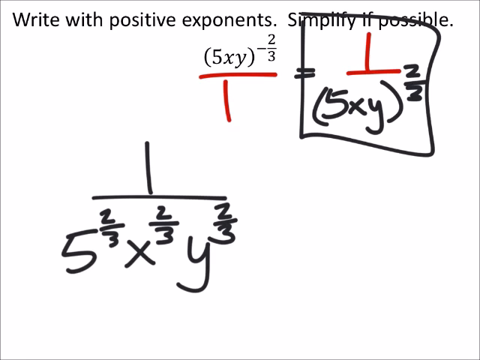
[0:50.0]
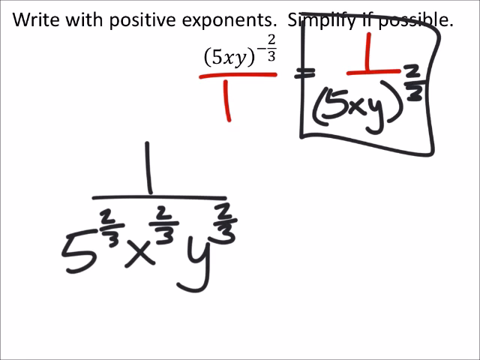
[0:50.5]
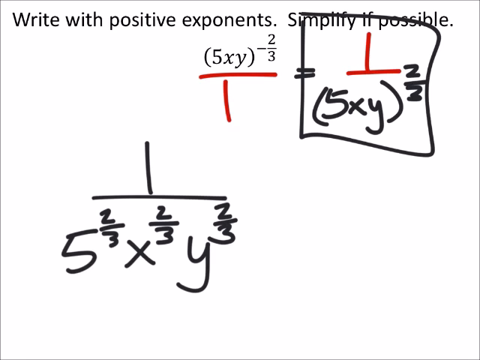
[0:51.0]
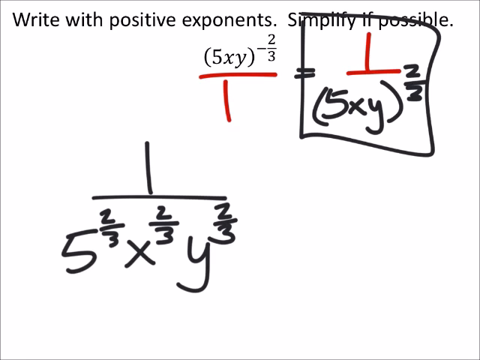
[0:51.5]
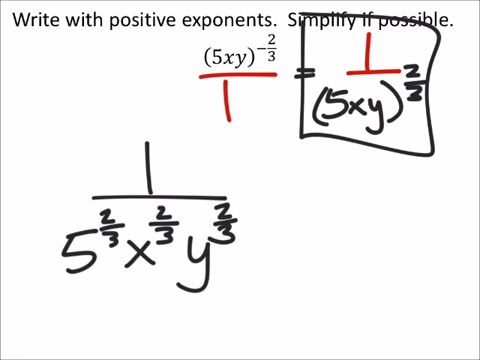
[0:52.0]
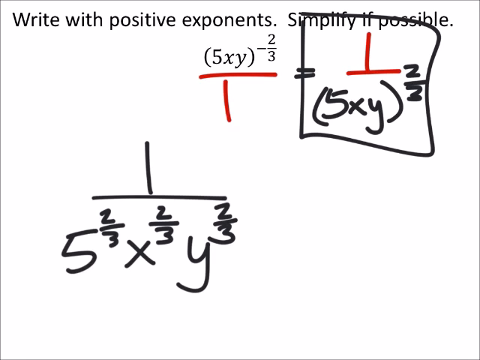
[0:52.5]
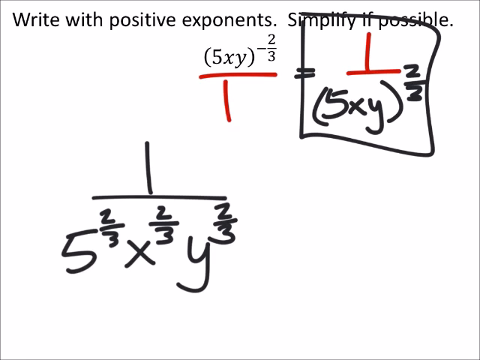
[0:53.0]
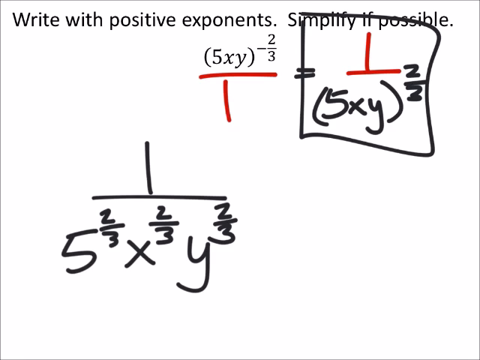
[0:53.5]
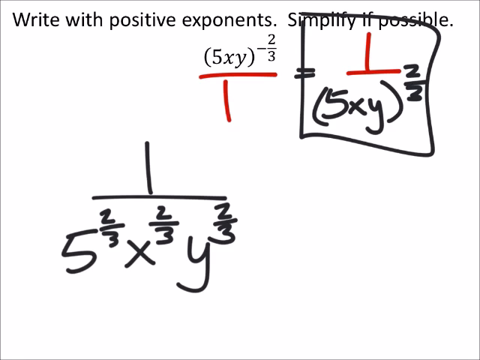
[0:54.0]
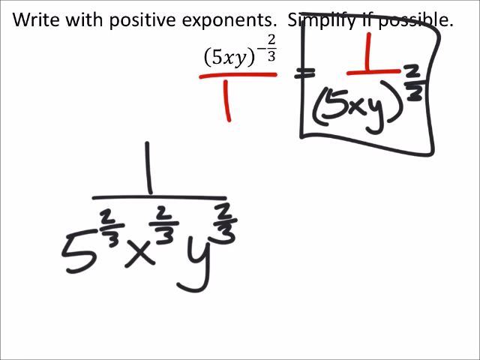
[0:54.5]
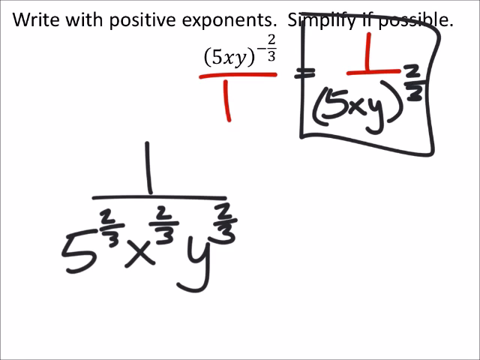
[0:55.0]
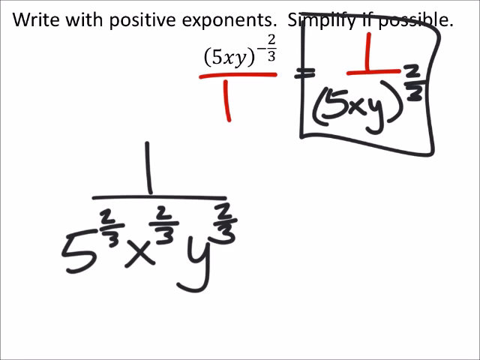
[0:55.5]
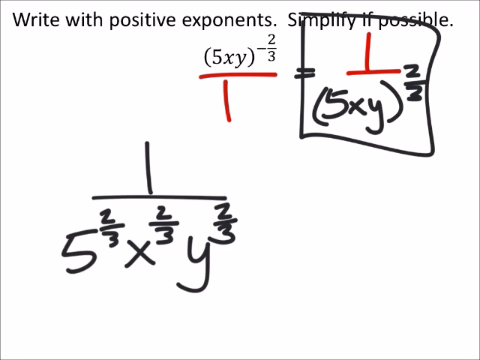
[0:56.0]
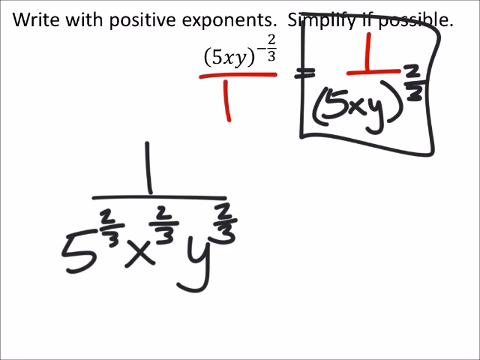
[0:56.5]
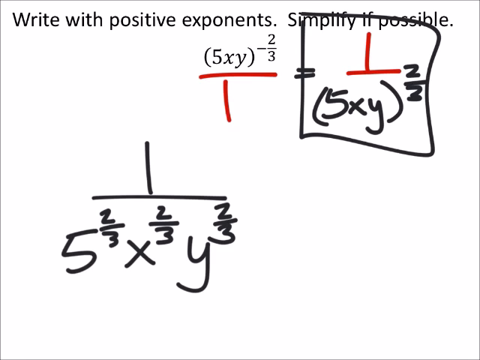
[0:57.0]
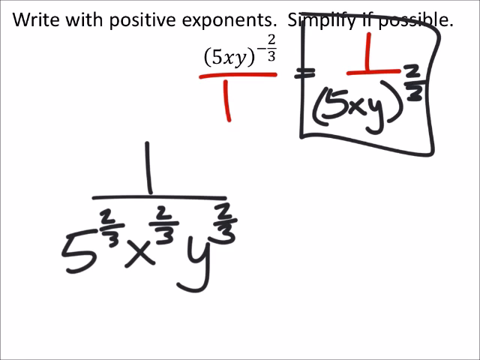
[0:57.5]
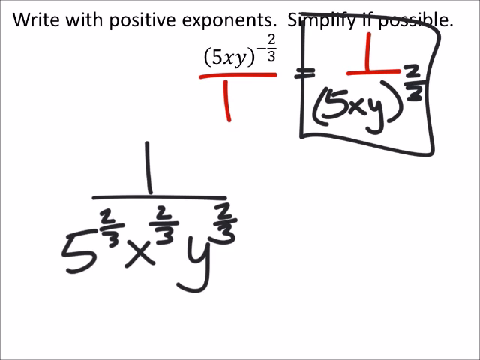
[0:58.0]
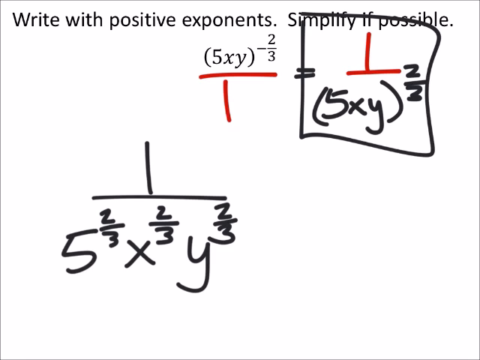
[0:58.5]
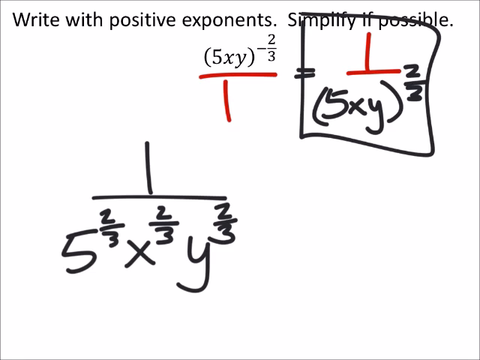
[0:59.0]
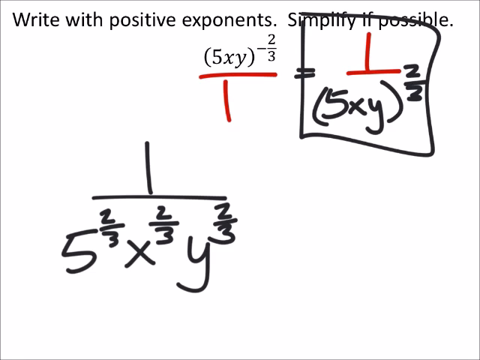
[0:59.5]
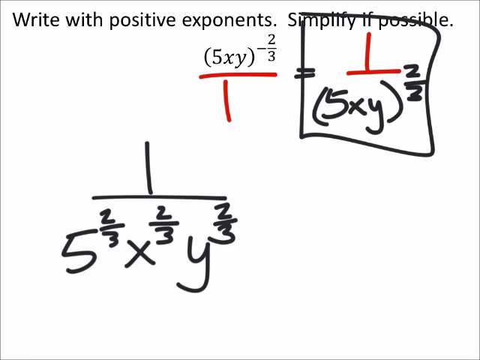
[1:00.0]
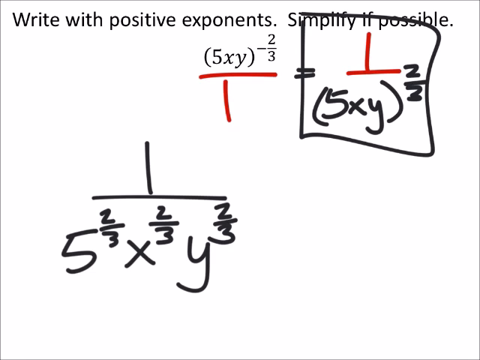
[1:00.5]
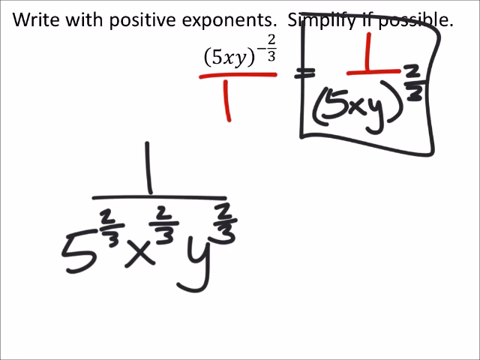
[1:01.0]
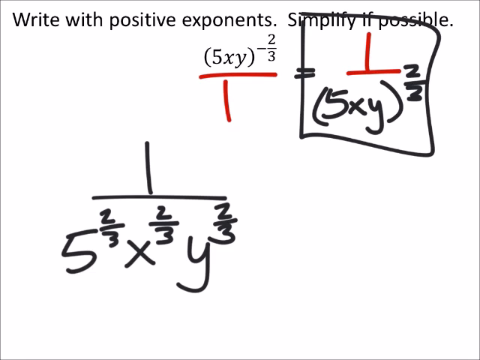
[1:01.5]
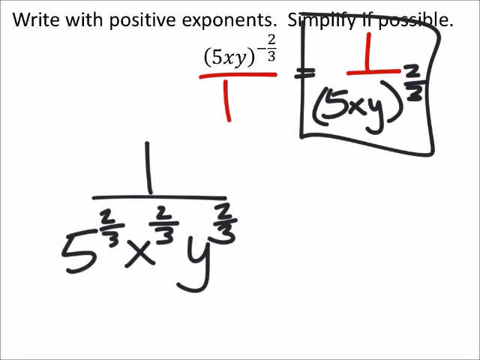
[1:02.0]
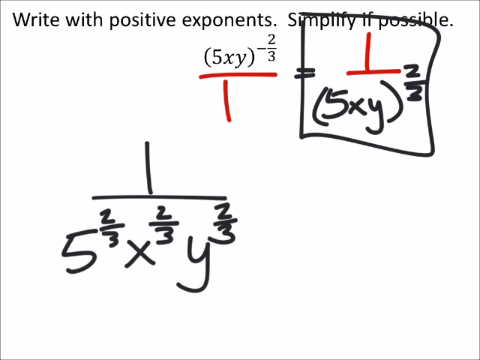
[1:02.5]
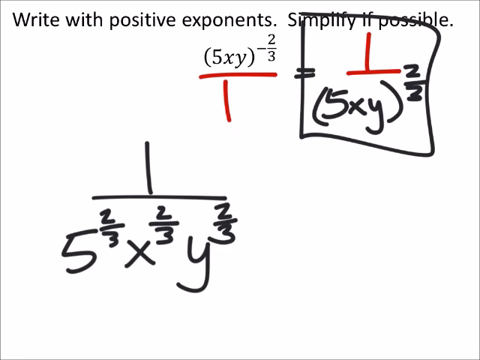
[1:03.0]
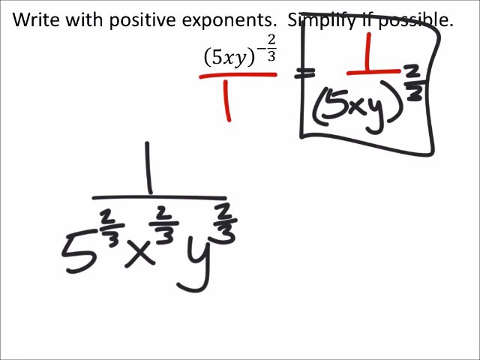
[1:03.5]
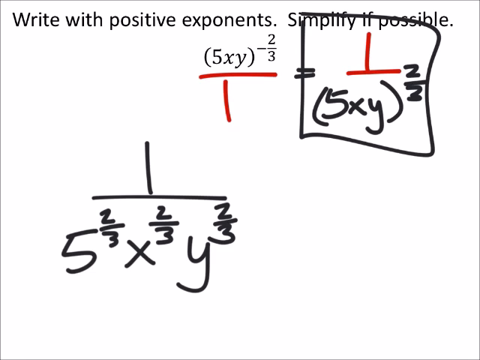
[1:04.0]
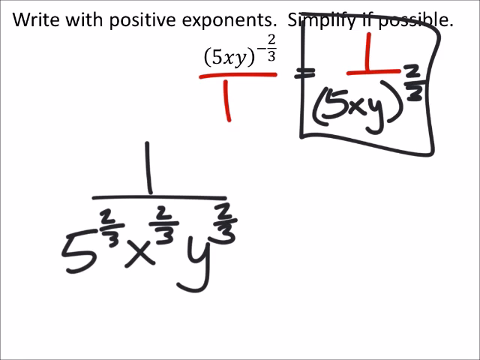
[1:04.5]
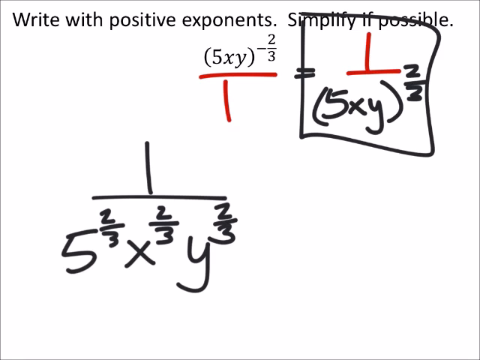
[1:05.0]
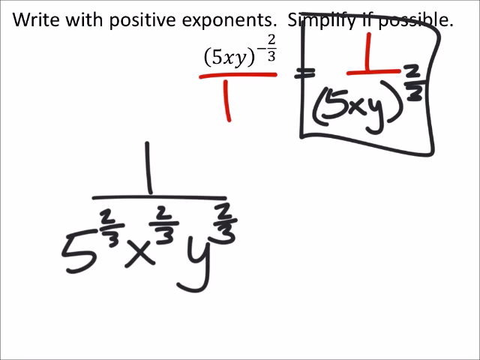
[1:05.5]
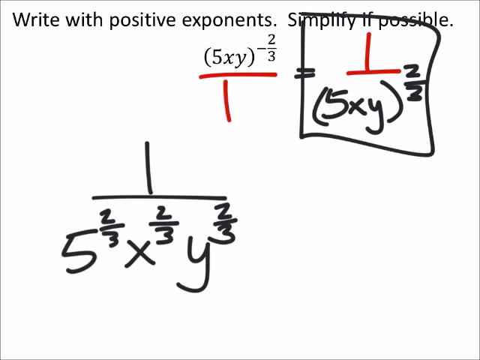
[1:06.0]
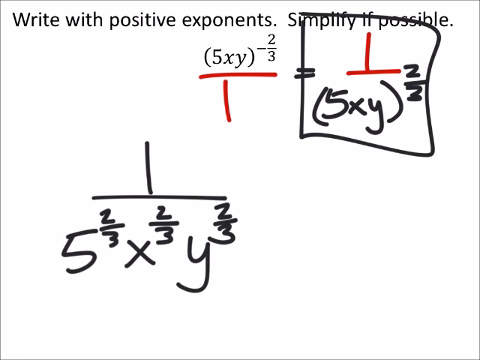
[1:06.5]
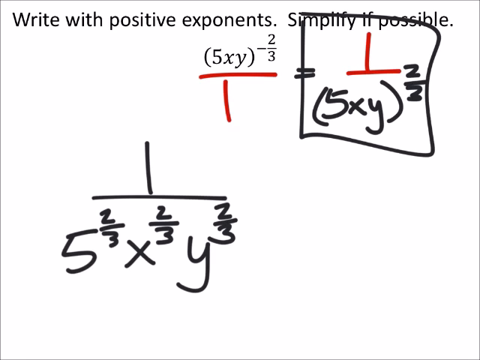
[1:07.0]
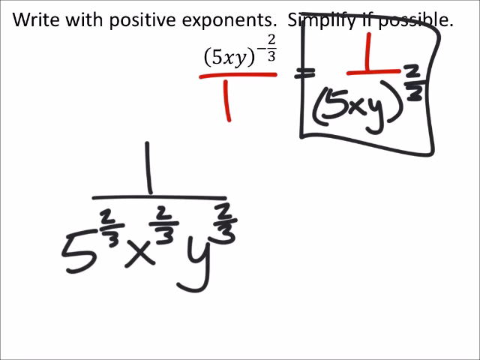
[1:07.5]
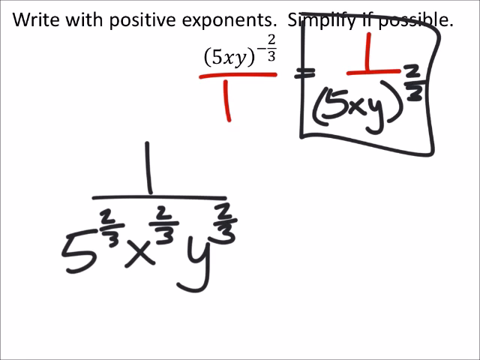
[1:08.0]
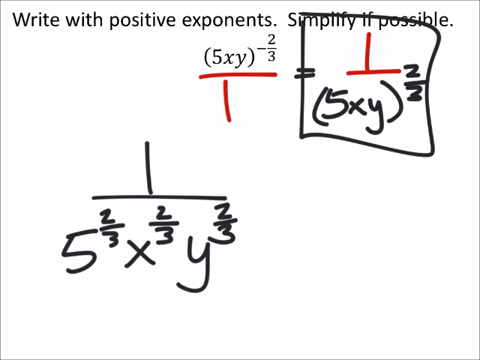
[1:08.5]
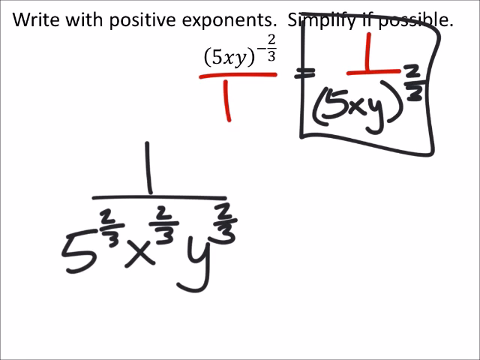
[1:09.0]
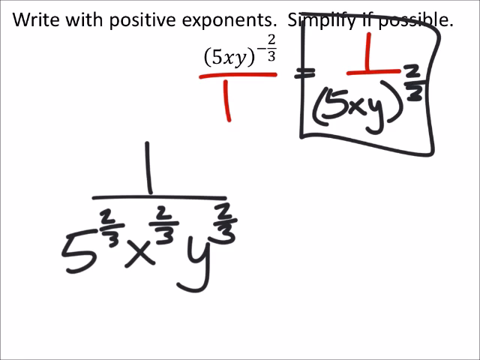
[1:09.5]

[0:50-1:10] Nothing changes on the whiteboard. The original question is at the top, with the step changing the negative power to a positive power, and underneath it the expression in which the three letters of 5xy are each raised to the power two-thirds. At the bottom of the screen a timer moves from left to right. Some of the text is red: the dividing line in the top two parts is red, as are the 1 over and the 1 below, while the rest of the text later in the problem is black.